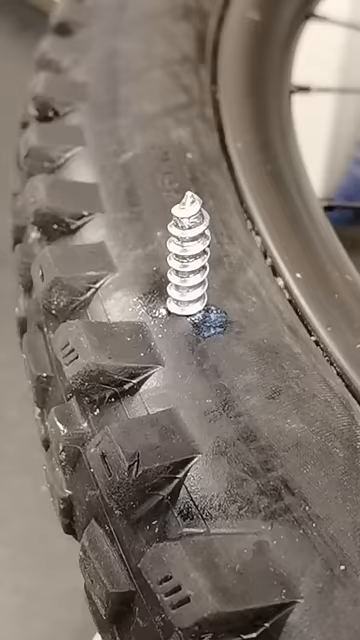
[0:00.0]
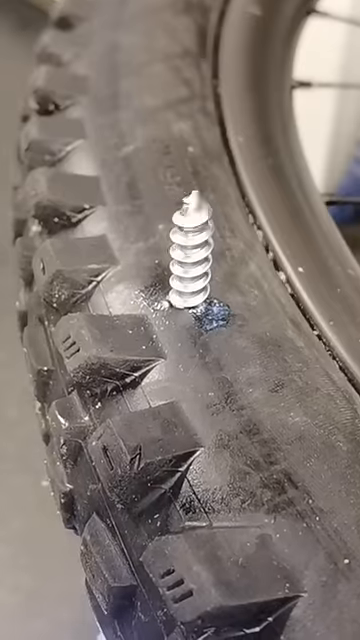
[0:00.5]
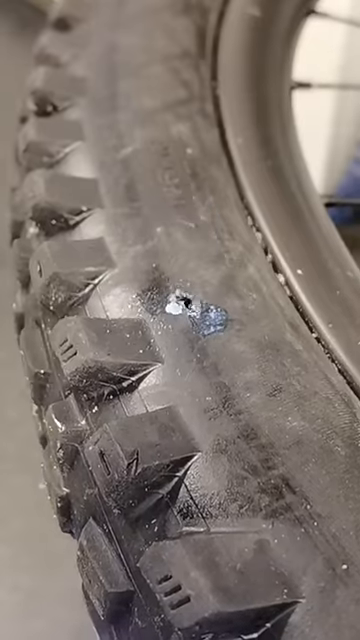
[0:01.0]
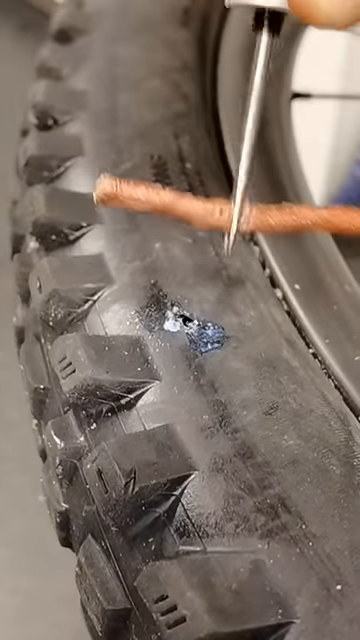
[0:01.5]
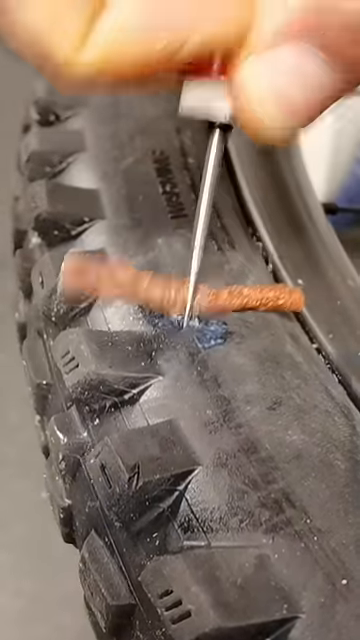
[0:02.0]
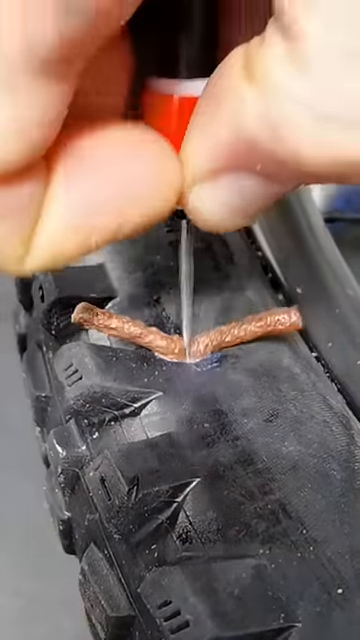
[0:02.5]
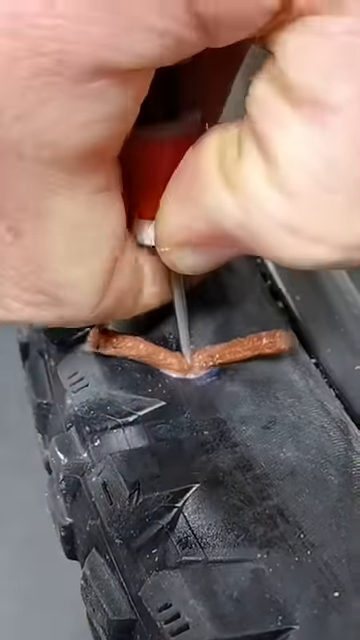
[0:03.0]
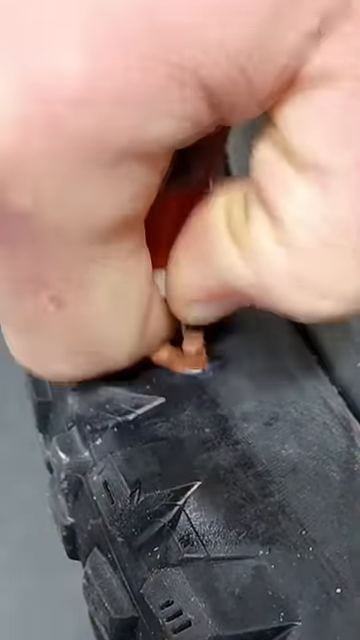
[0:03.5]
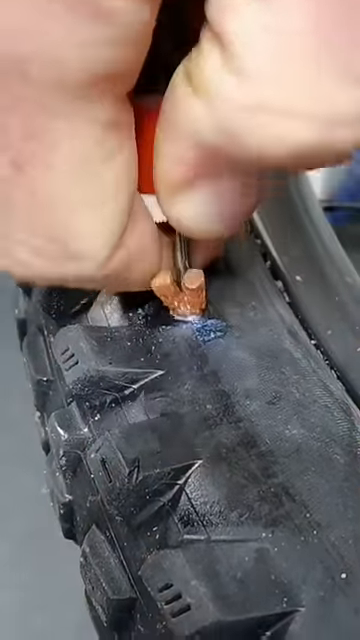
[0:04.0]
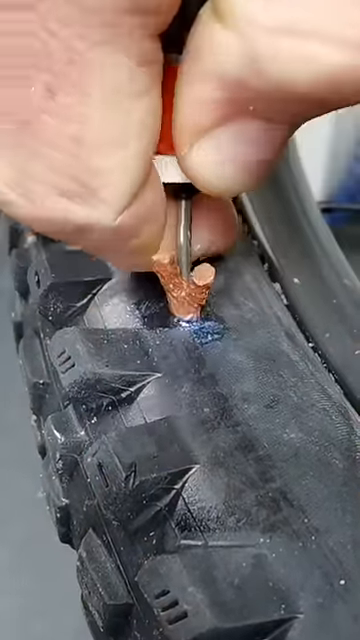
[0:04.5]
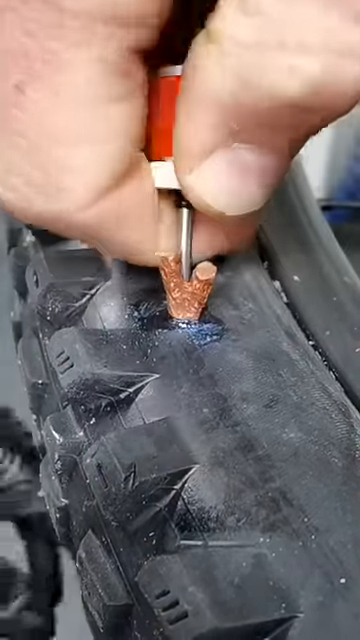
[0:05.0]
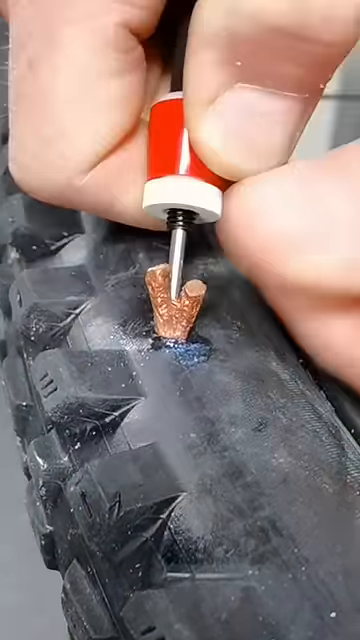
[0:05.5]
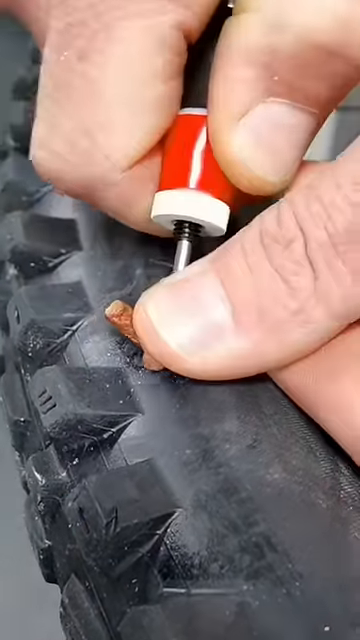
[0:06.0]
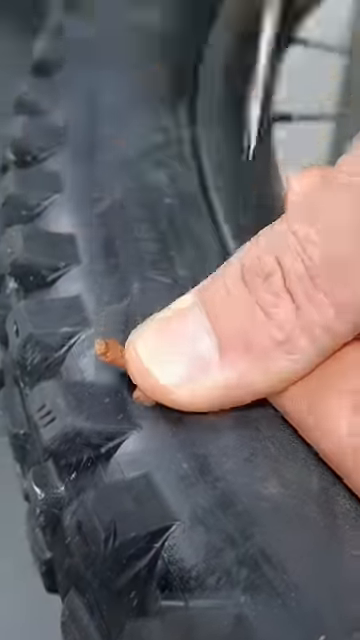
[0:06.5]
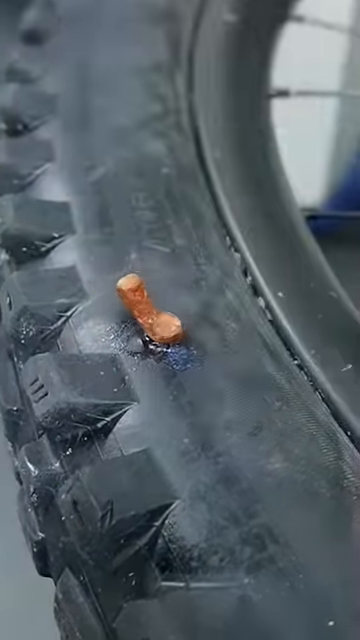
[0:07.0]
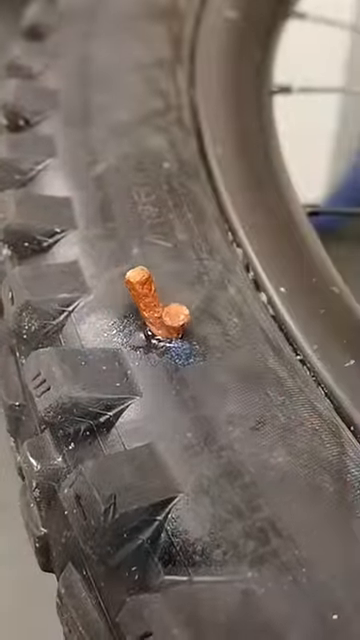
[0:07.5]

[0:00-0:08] A person repairs a hole in a tire after drilling through it. The hole was put in the tire so they can demonstrate how to plug the tire as opposed to replacing it. They use a tool along with what appears to be the accessories or equipment needed to plug the tire. The plug material is brown and flexible, and it goes right into the tire with a tool that looks kind of like a huge thumbtack. It plugs the hole right up, but the plugging of the hole is only visible on one side; what happens on the other side of the tire is not shown.